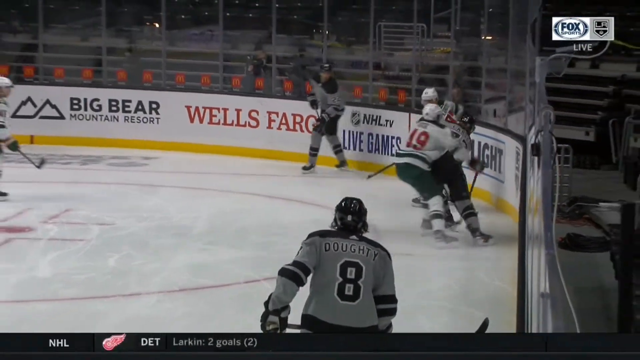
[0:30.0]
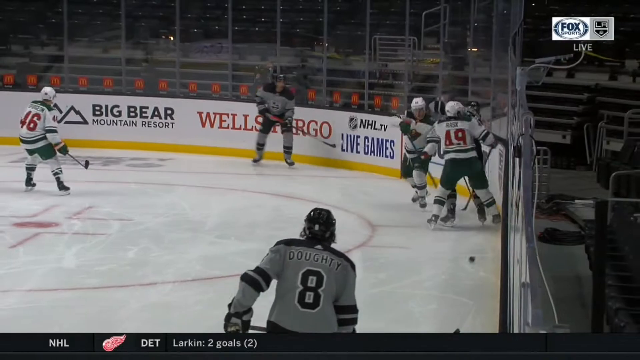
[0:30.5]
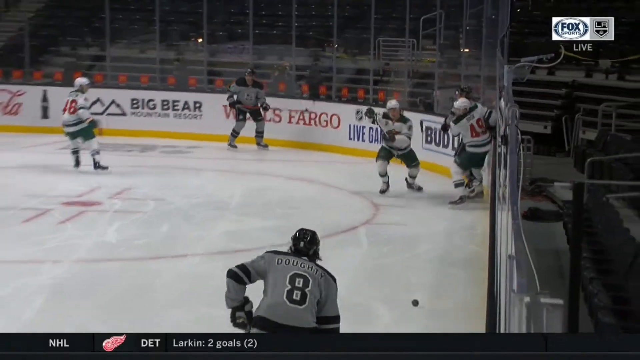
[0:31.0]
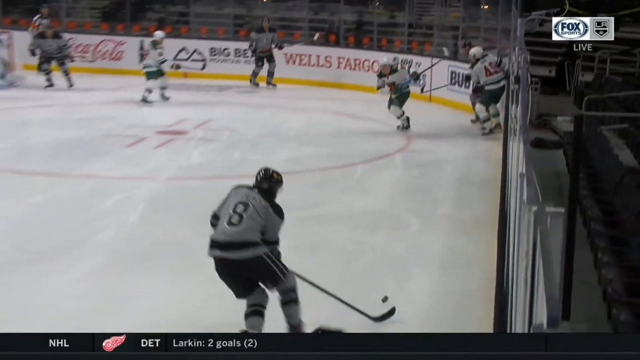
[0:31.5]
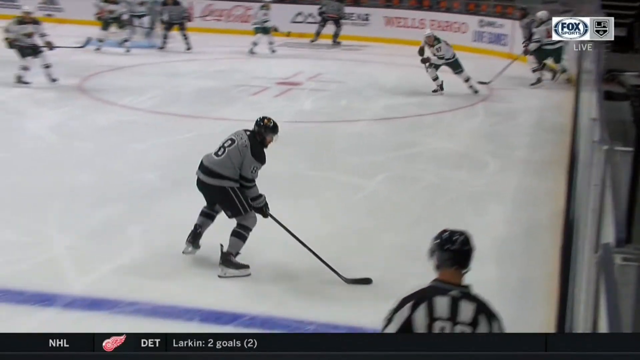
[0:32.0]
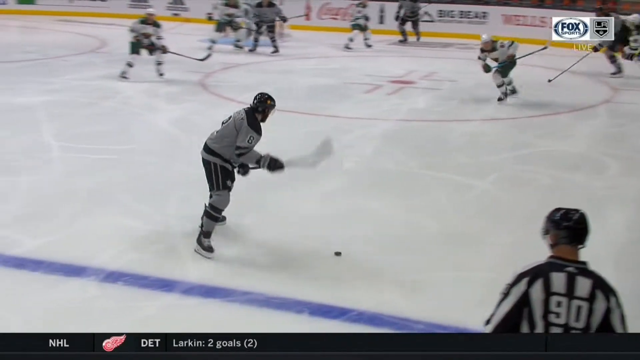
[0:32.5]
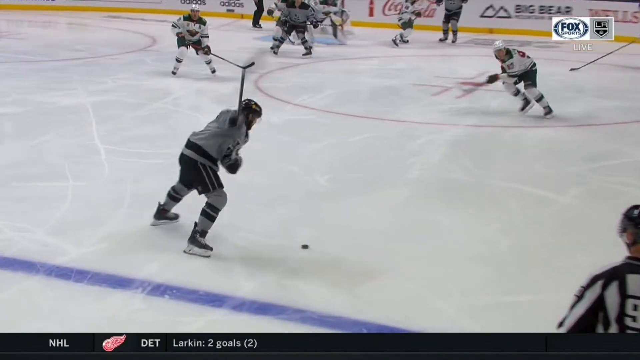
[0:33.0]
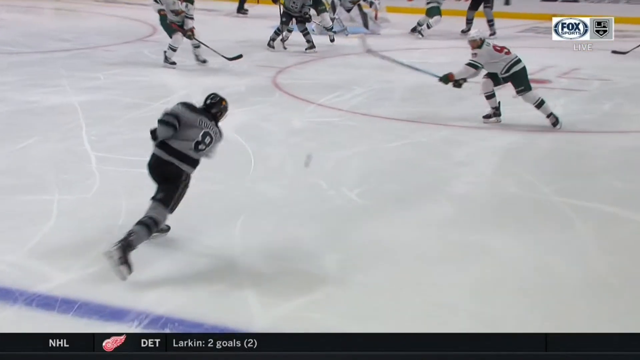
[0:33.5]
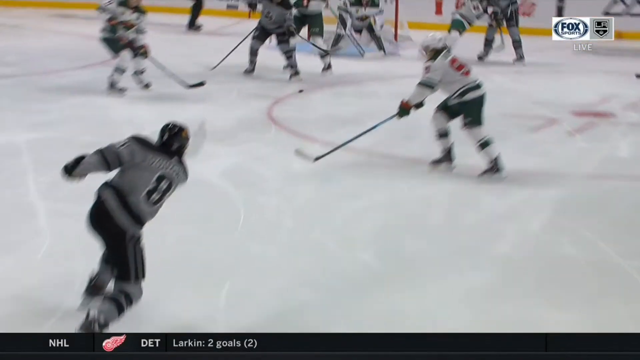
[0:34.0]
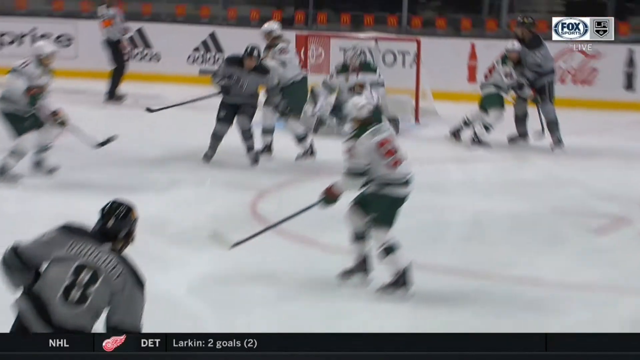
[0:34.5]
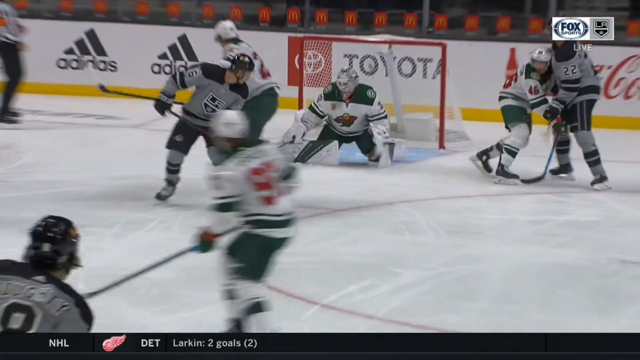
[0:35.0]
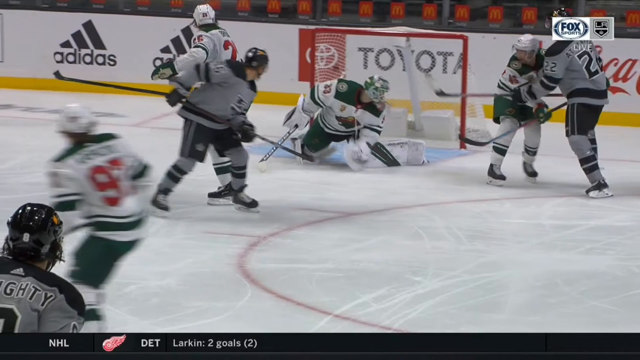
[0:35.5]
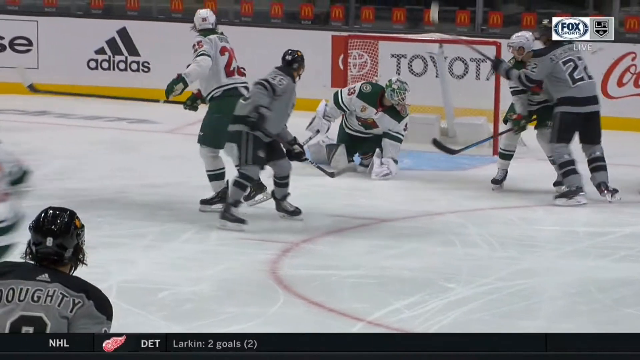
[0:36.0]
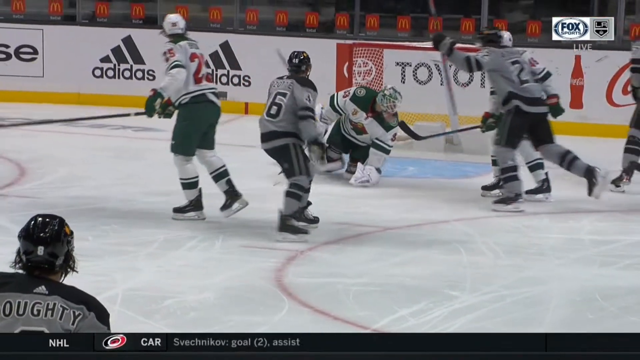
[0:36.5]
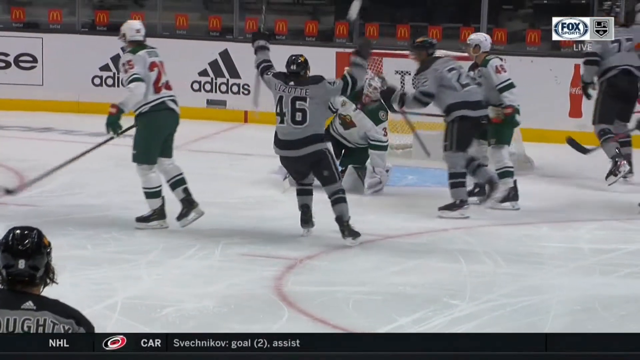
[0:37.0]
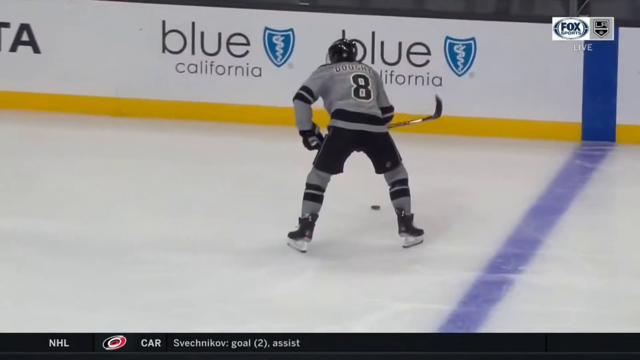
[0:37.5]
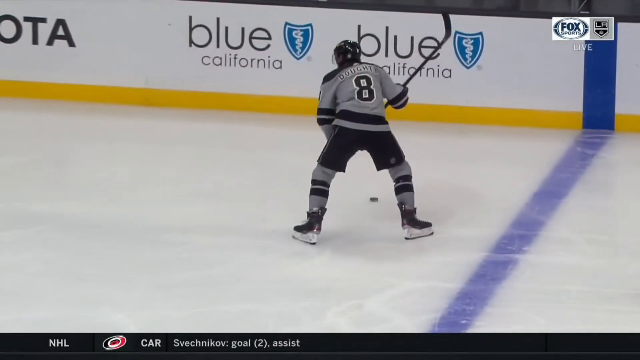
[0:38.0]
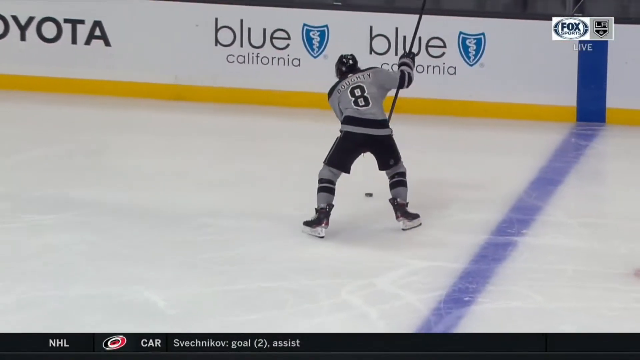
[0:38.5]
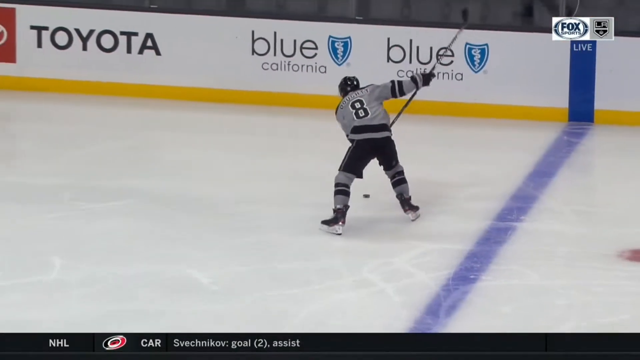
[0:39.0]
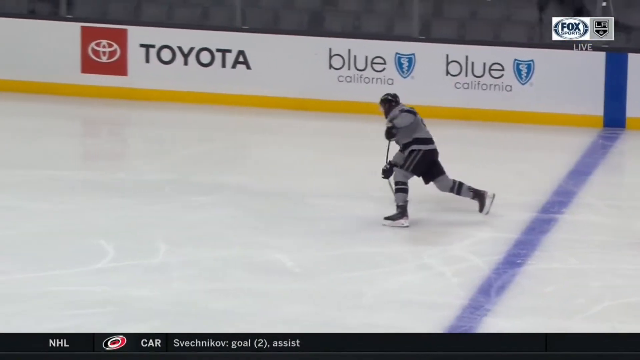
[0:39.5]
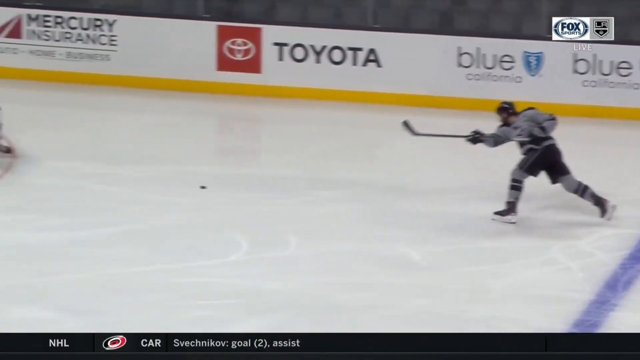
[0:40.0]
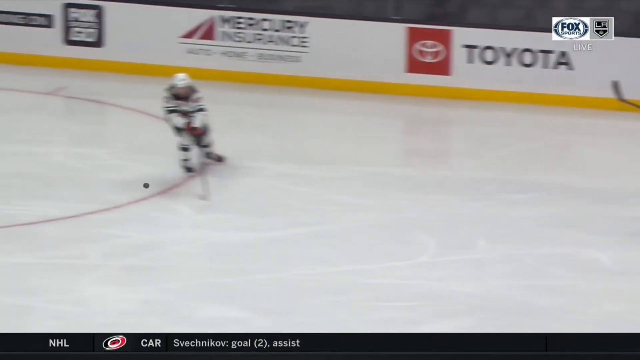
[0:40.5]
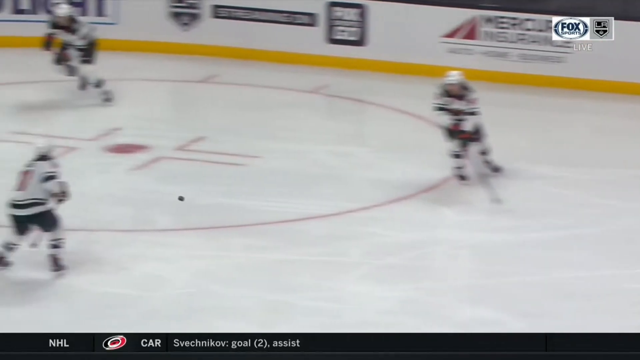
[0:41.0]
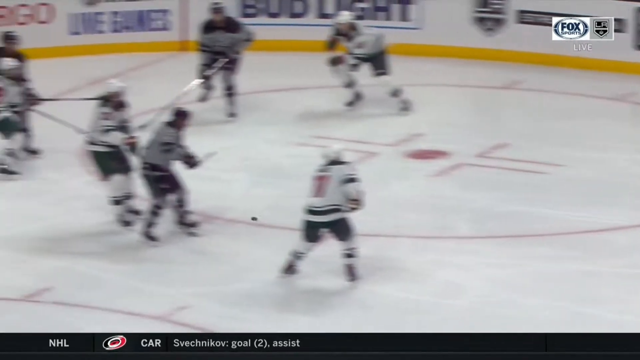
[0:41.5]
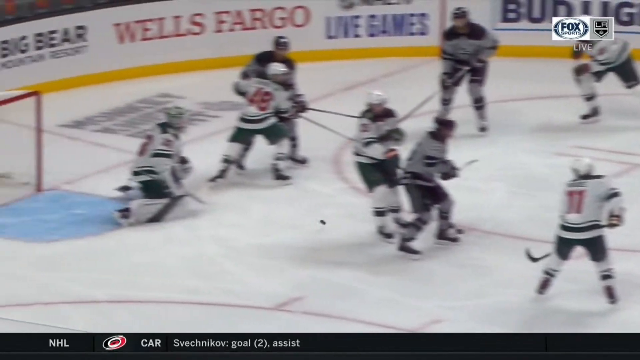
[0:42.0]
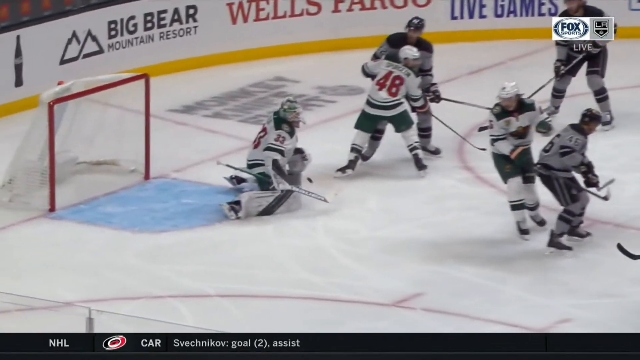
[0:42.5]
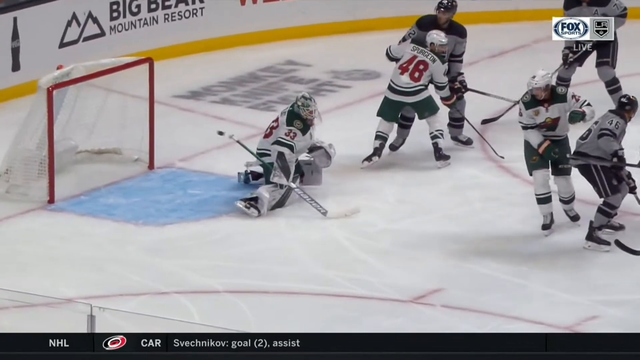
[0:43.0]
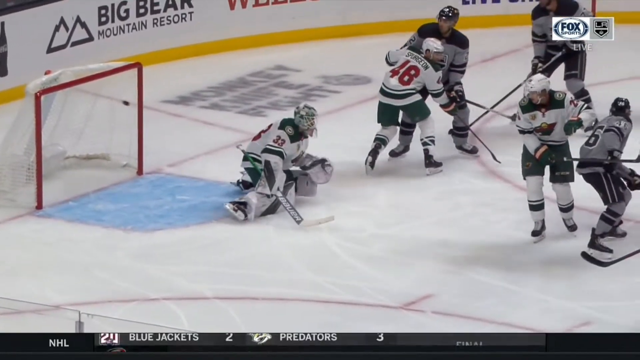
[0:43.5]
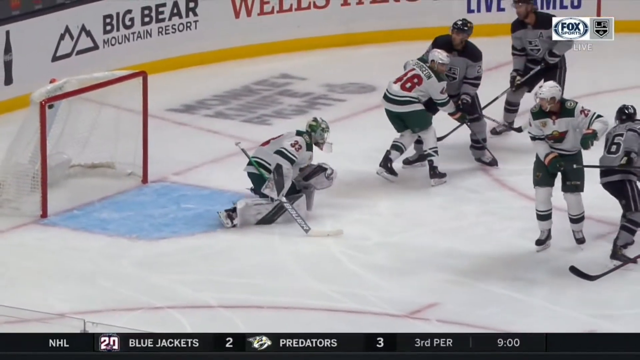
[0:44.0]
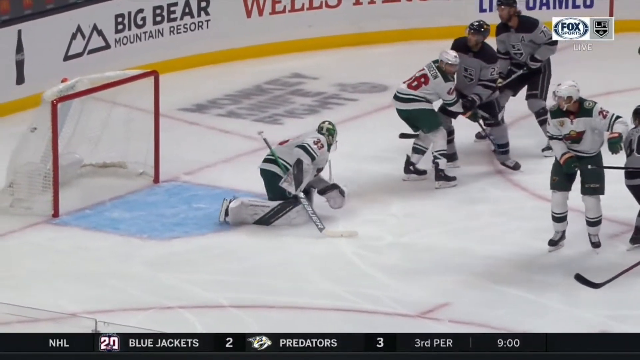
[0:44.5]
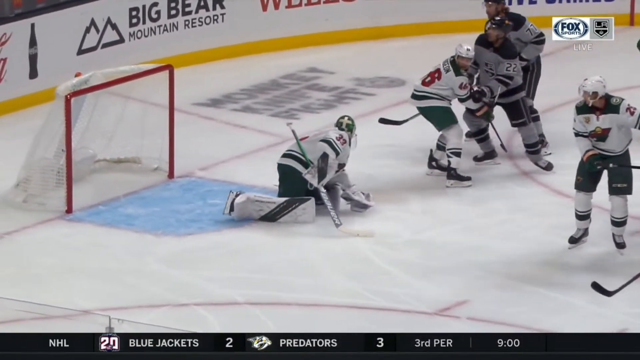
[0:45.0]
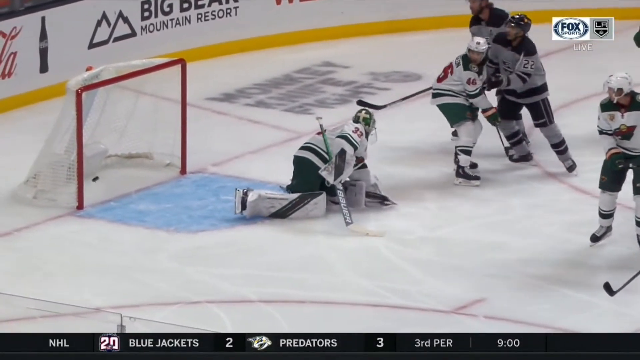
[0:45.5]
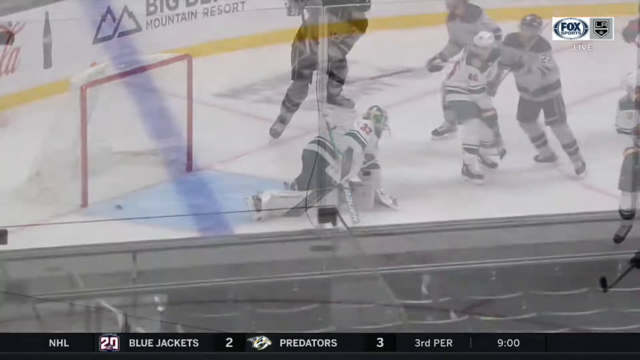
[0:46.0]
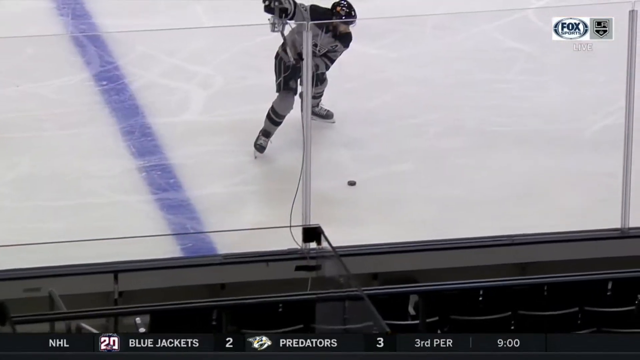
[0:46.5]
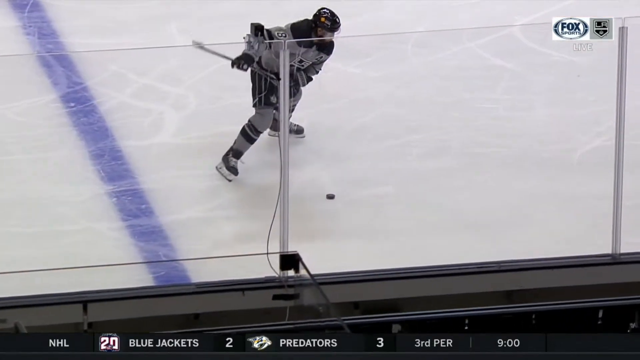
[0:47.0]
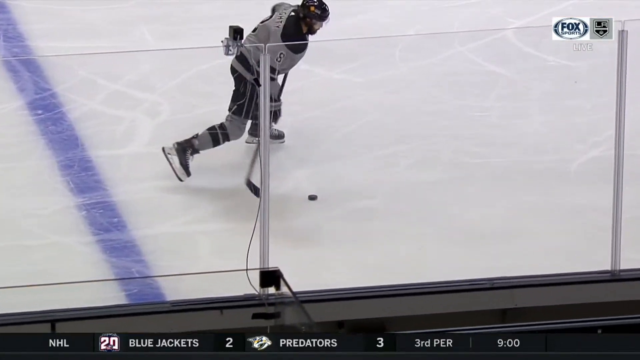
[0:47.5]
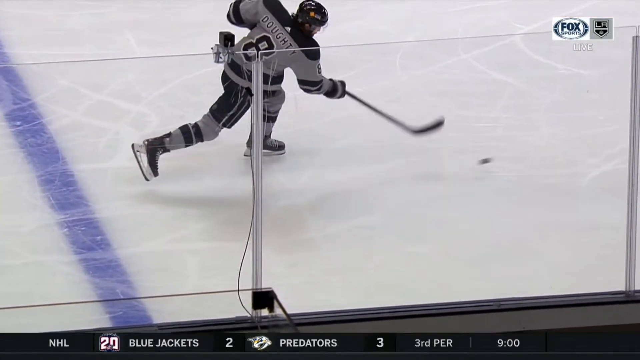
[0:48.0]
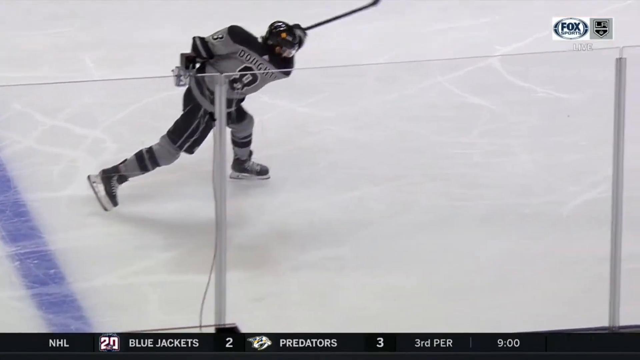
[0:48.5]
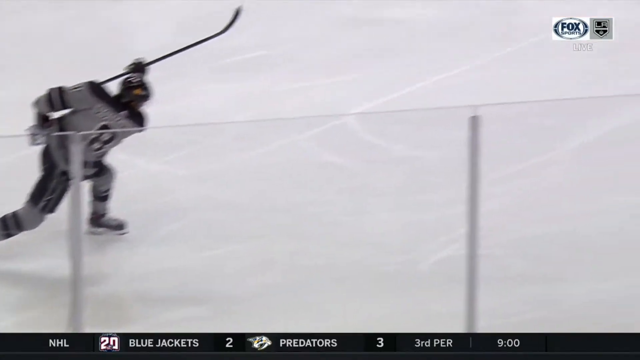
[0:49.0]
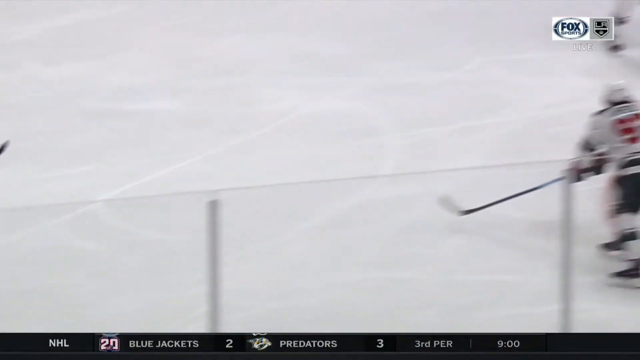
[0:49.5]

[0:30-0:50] A replay of the goal begins in the rounded corner at the white team's end, where the puck is taken. A player in grey passes the puck back to number eight, who takes one touch, winds up, lifts back his stick, stretches out and hits the puck towards the white goal. The puck ricochets off a white player's stick, then apparently off a grey player's foot, passes the goalkeeper and goes into the top left of the goal. The goal is shown from two or three different angles, all in slow motion. In the background are white advertising hoardings below the clear protective screening, which stretches above them, with ads for "Big Bear Mountain Resort", "Wells Fargo", "NHL TV Live Games", "Coca-Cola", "Toyota", "Adidas" and "Blue California".